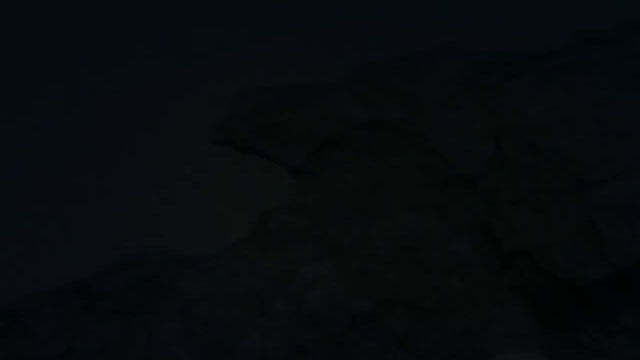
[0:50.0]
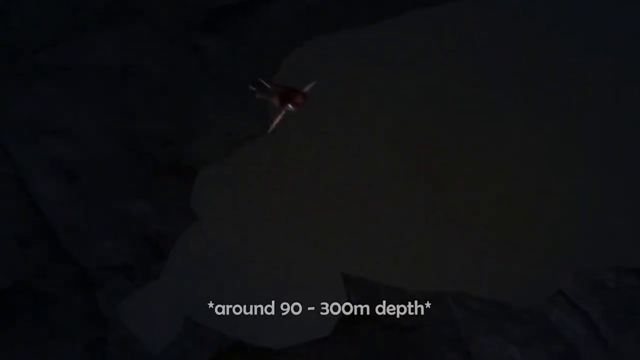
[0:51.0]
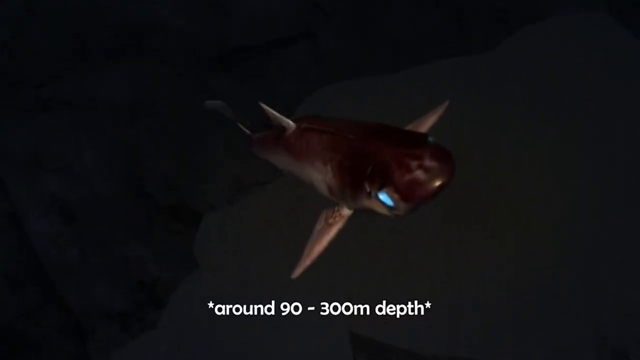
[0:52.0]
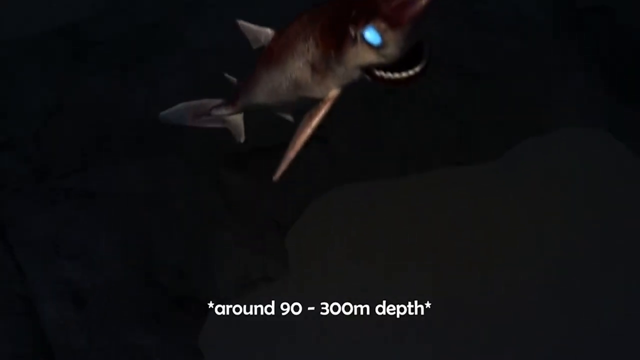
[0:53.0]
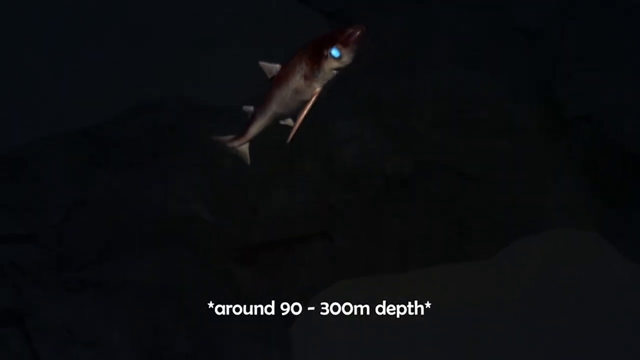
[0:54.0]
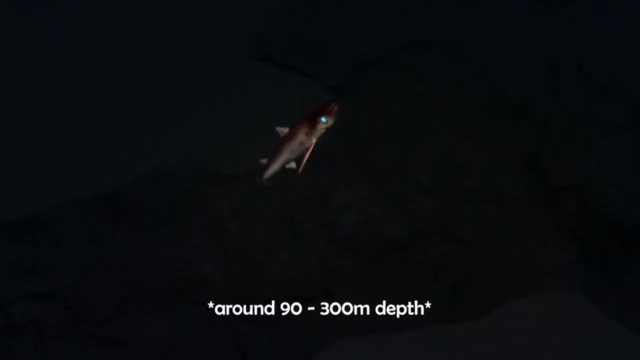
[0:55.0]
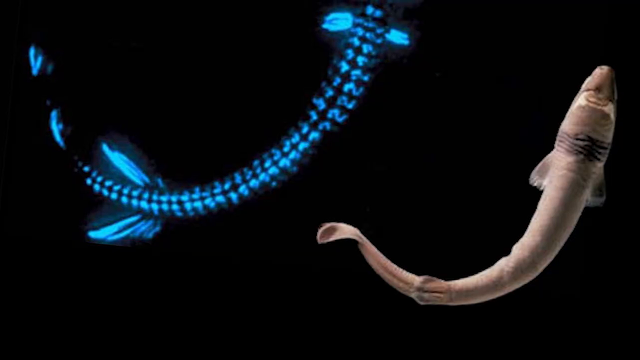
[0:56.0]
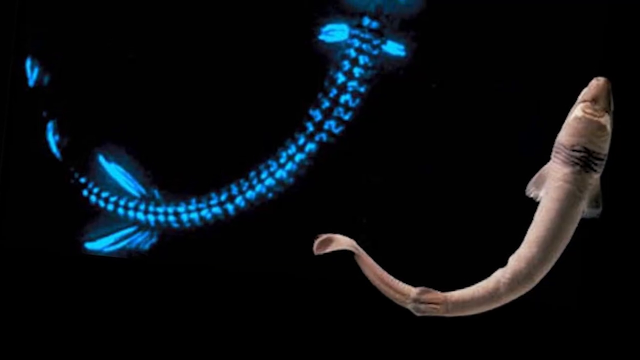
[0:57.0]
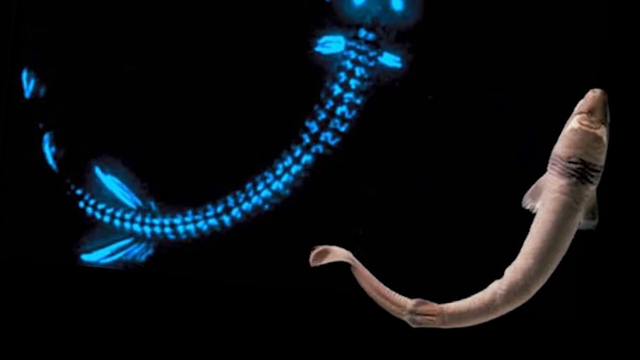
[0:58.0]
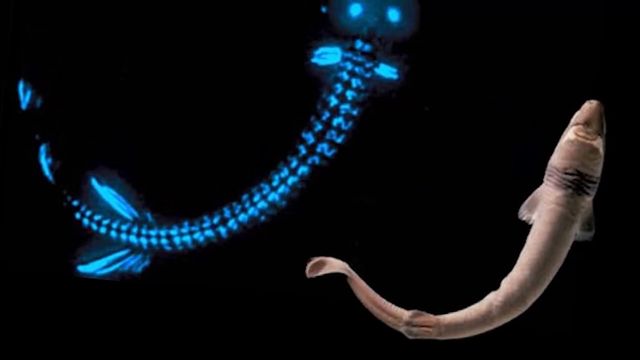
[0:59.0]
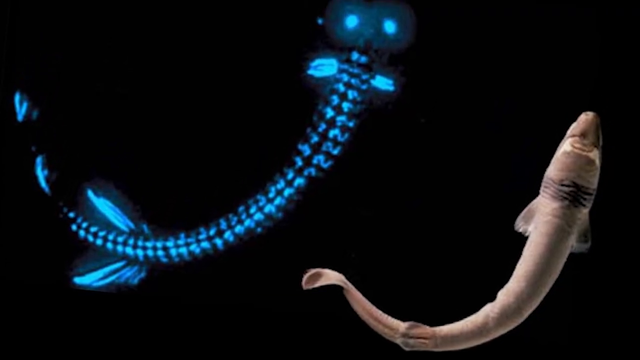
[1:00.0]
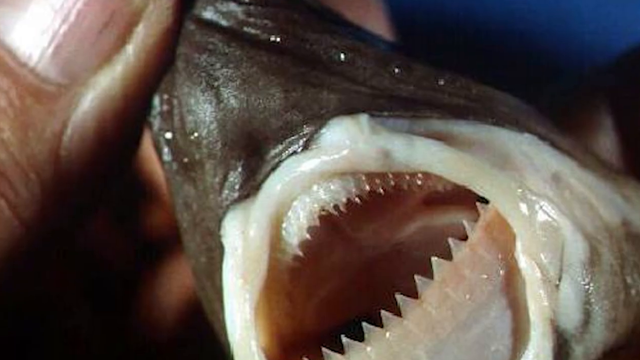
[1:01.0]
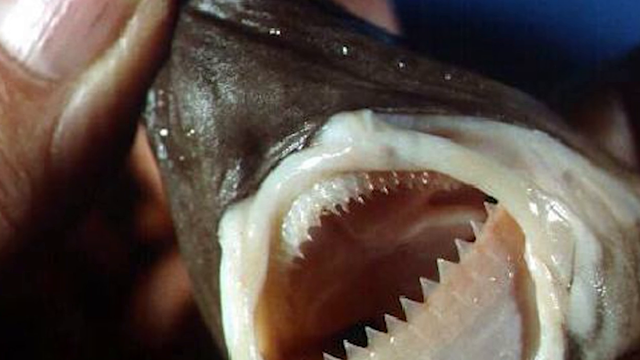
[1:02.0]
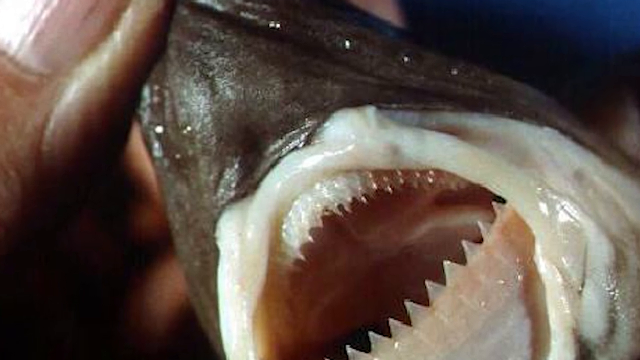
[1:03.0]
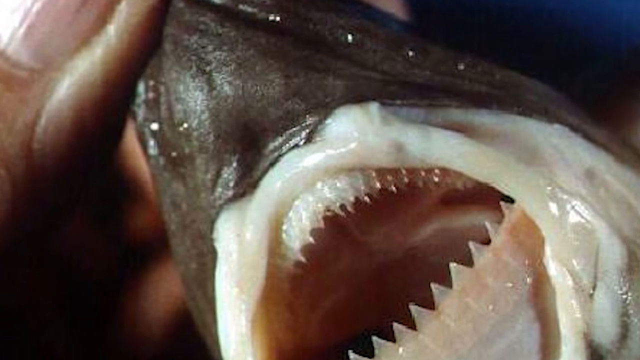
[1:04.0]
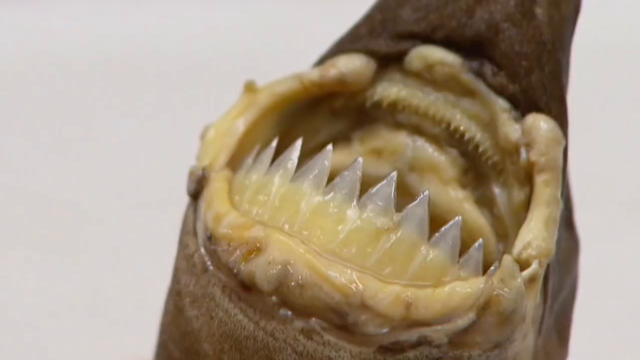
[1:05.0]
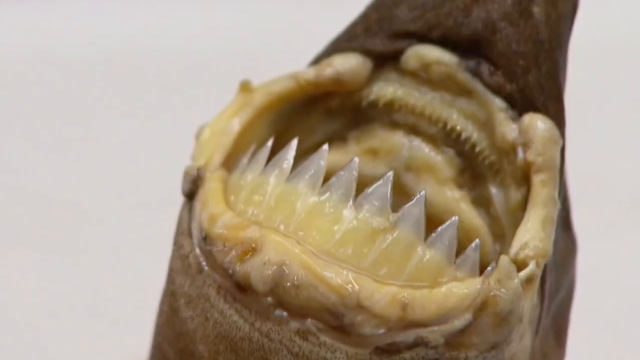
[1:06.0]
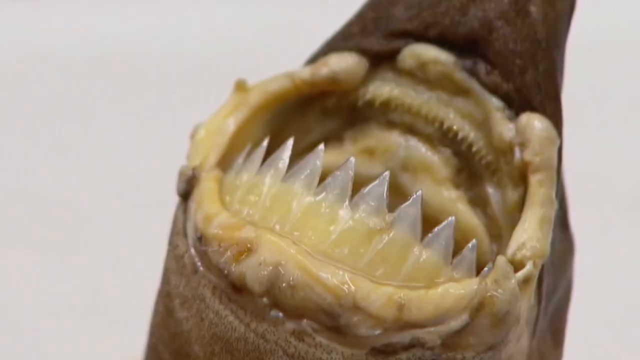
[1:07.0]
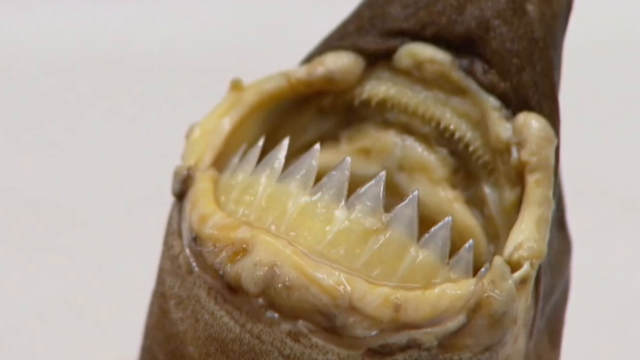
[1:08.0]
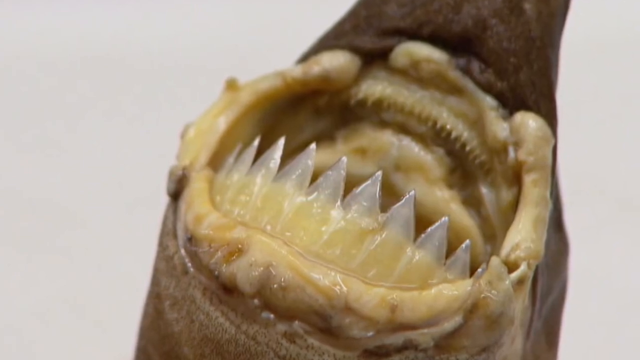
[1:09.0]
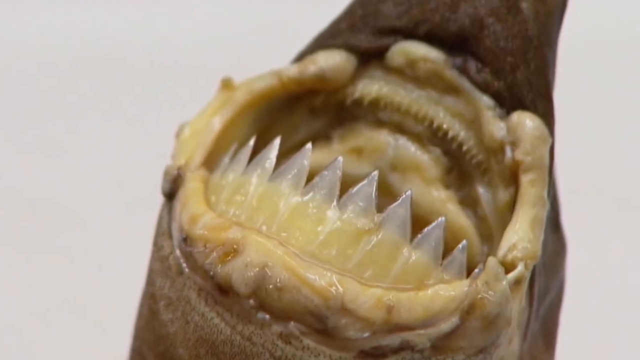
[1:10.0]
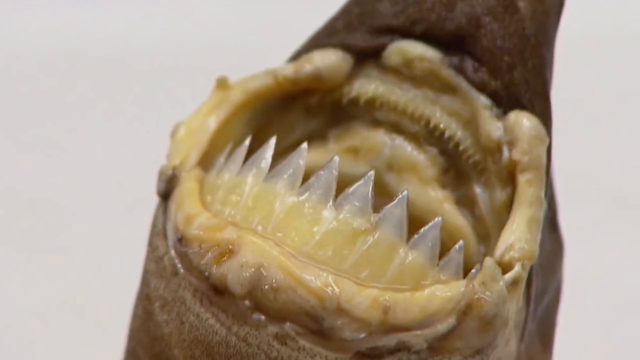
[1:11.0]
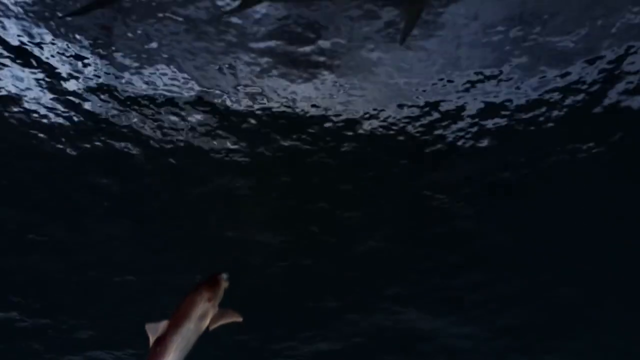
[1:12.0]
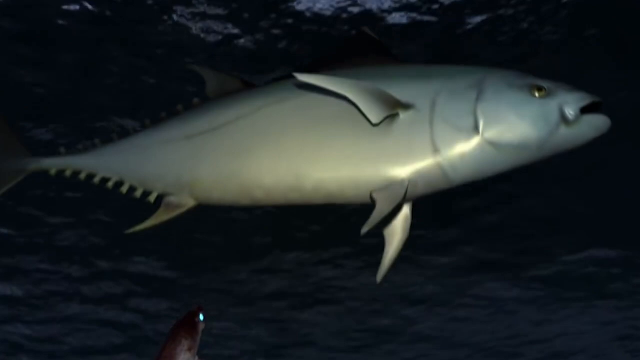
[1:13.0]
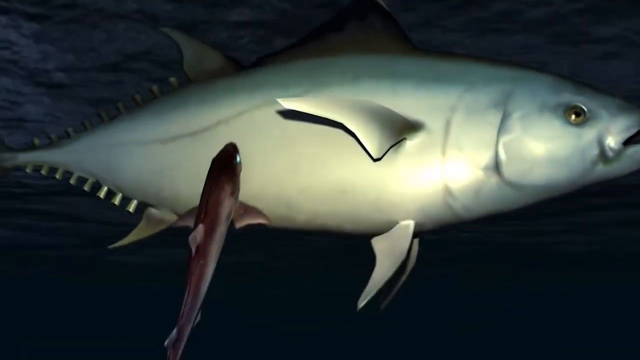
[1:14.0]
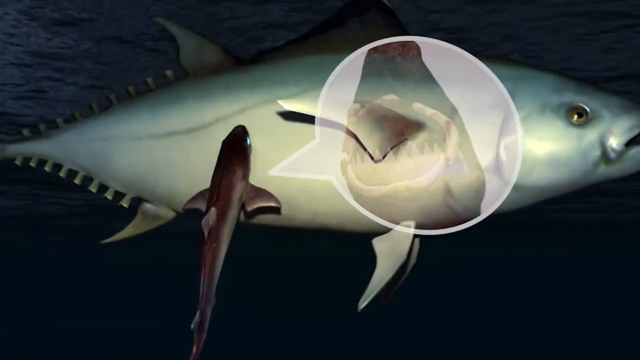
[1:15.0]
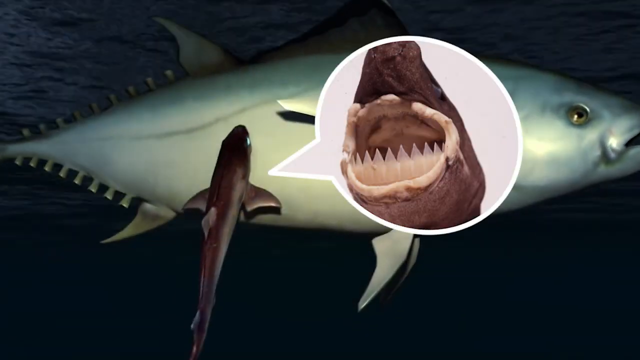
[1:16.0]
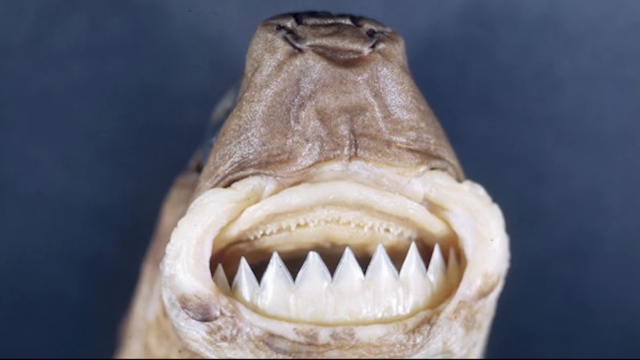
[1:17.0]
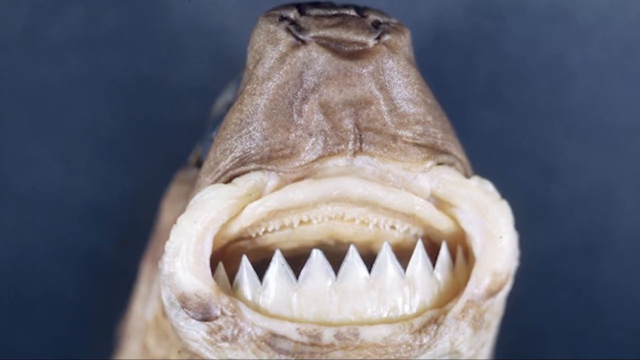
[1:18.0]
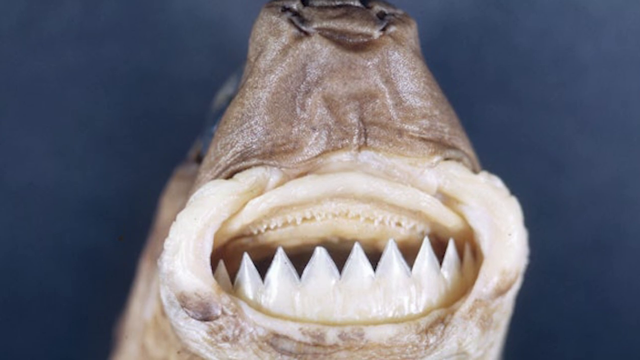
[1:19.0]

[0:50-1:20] A depth of around 90 to 300 meters is indicated, and some other species that may be found in these areas are shown. The video focuses in on the fish's translucent, sharp teeth.